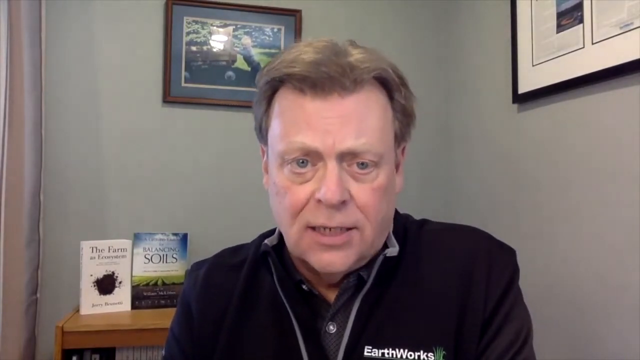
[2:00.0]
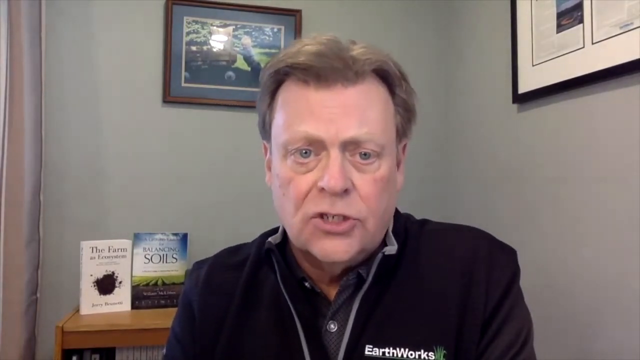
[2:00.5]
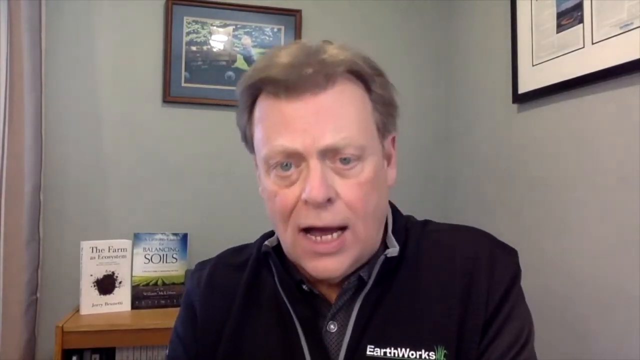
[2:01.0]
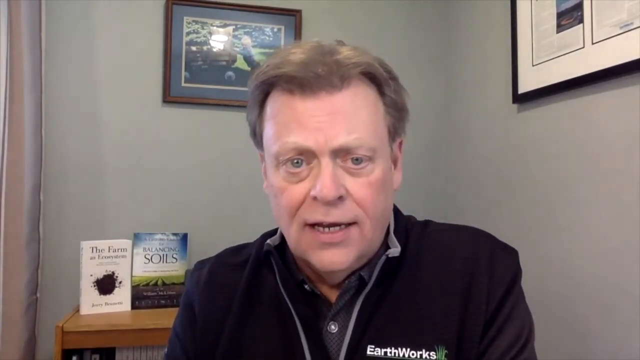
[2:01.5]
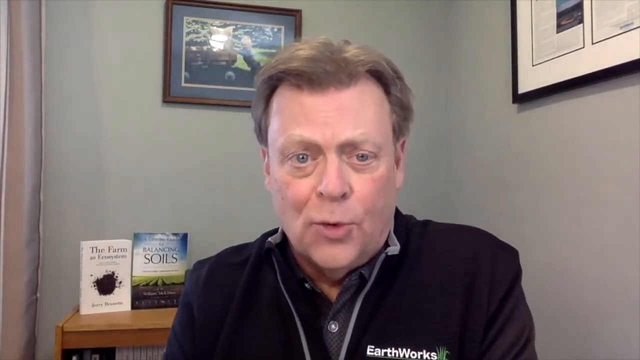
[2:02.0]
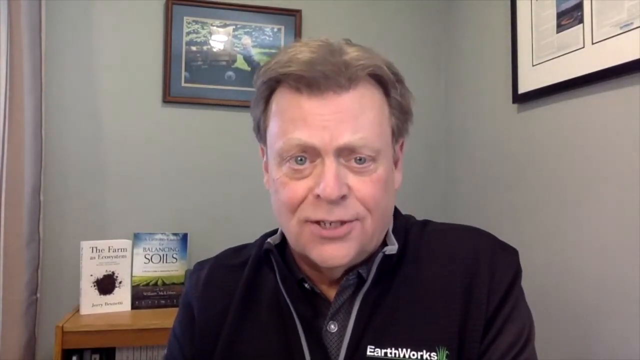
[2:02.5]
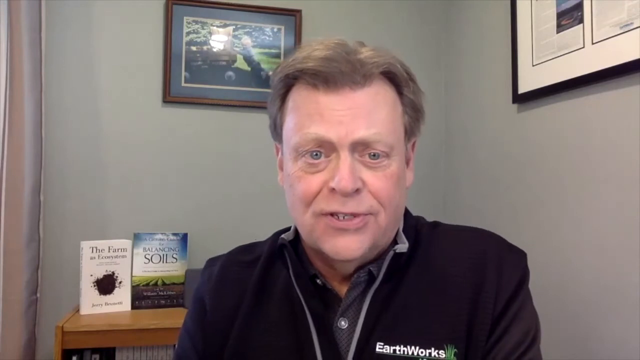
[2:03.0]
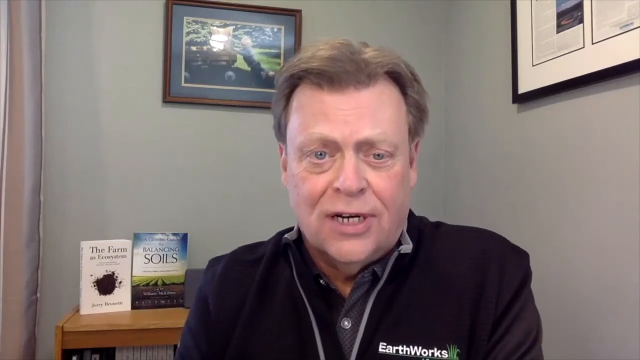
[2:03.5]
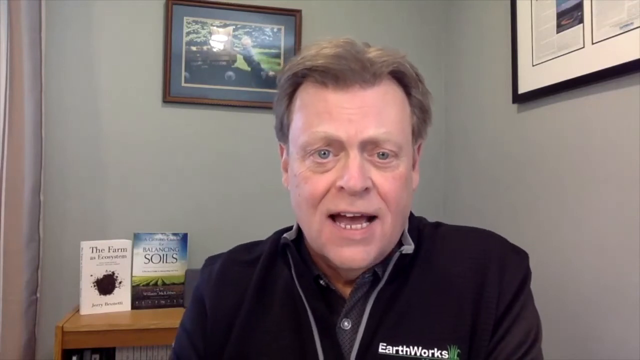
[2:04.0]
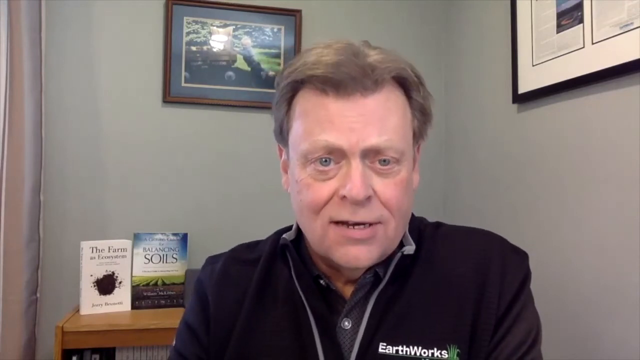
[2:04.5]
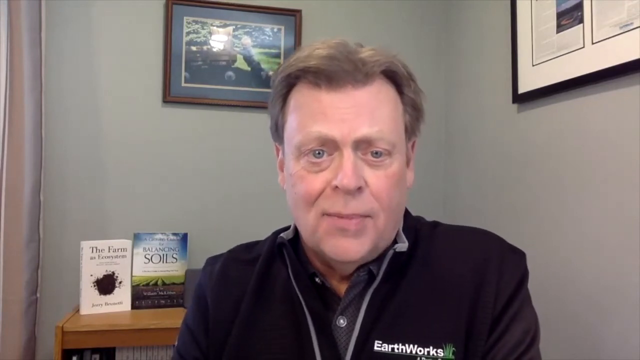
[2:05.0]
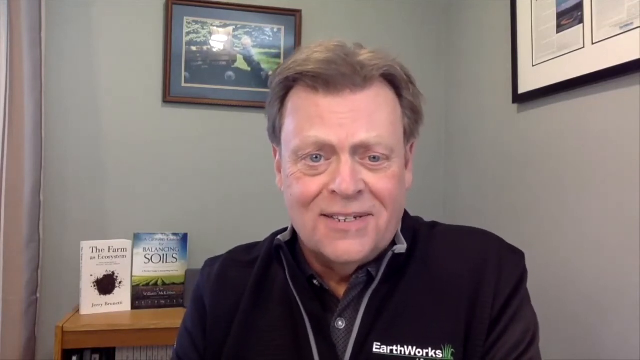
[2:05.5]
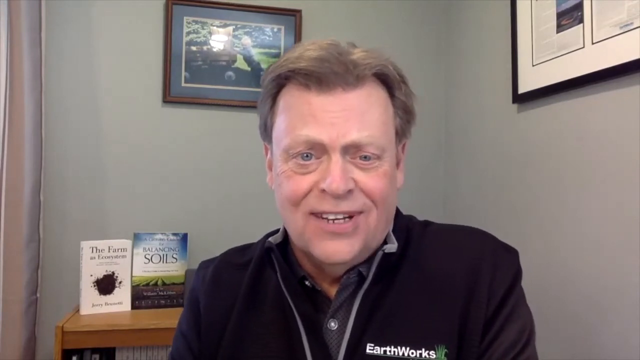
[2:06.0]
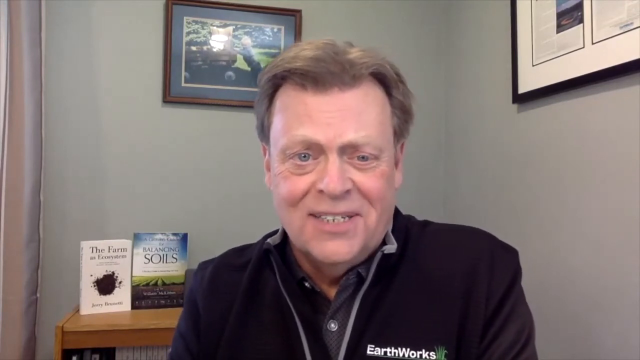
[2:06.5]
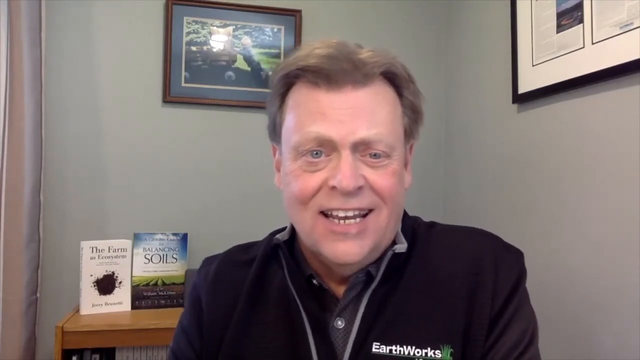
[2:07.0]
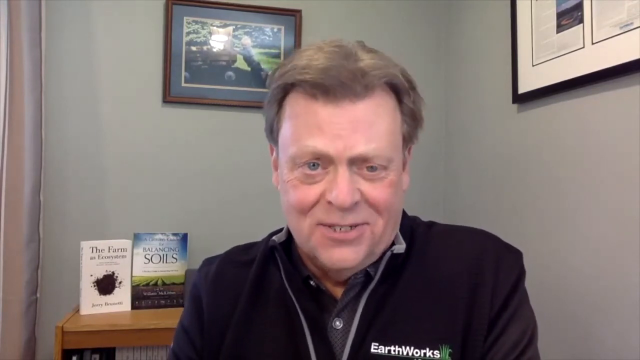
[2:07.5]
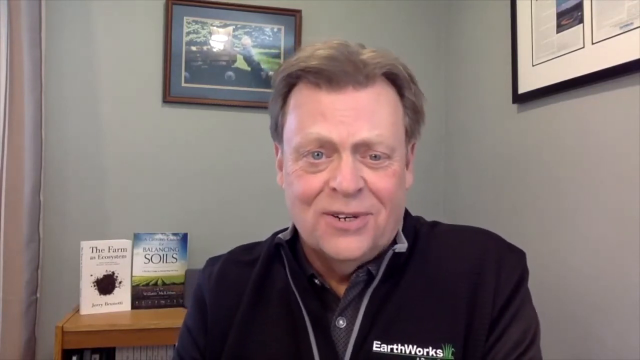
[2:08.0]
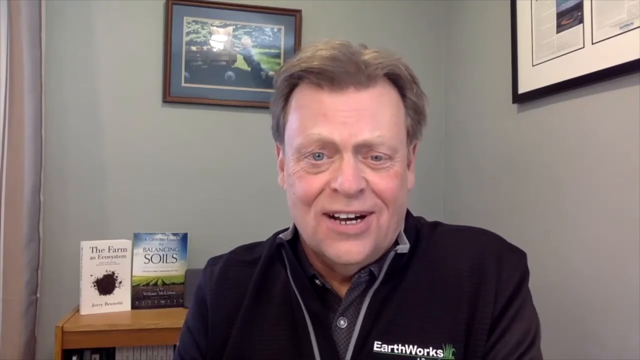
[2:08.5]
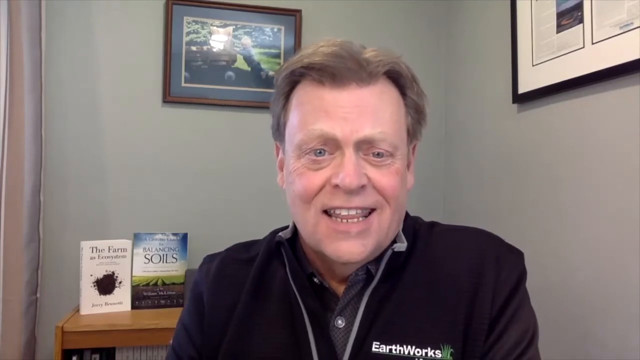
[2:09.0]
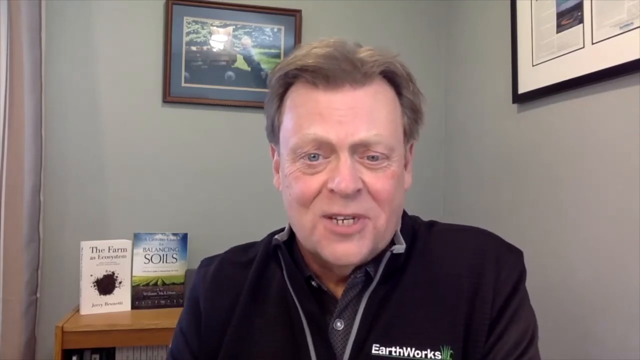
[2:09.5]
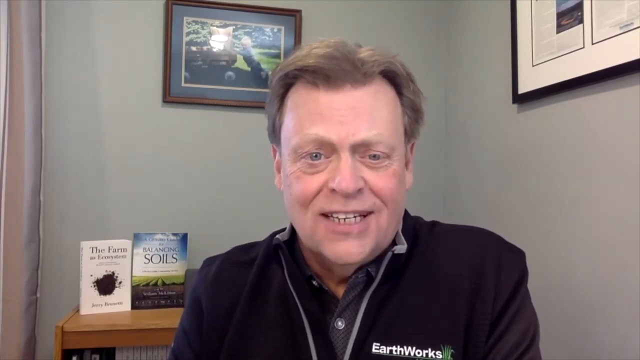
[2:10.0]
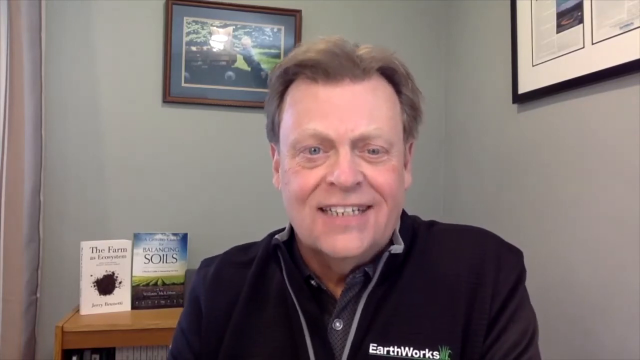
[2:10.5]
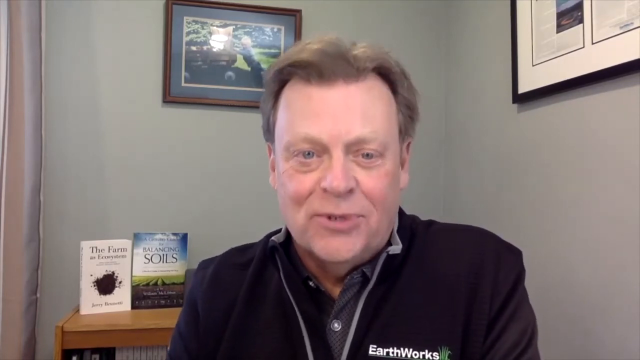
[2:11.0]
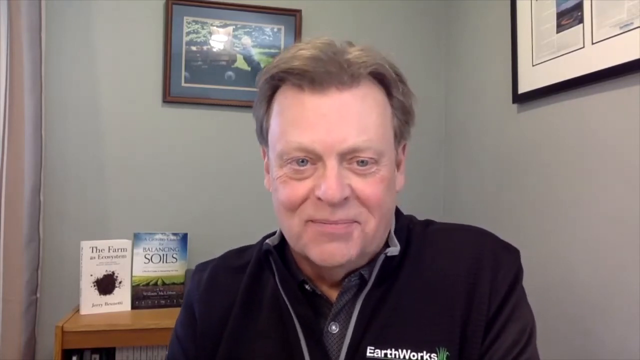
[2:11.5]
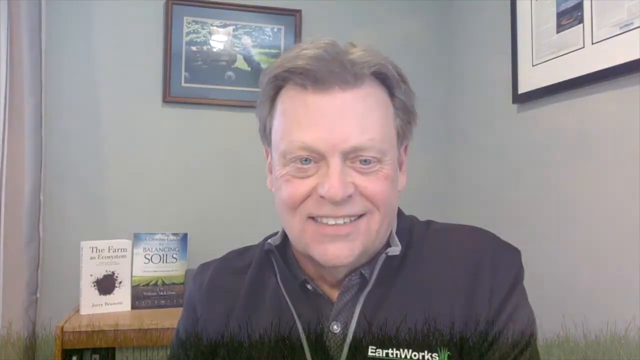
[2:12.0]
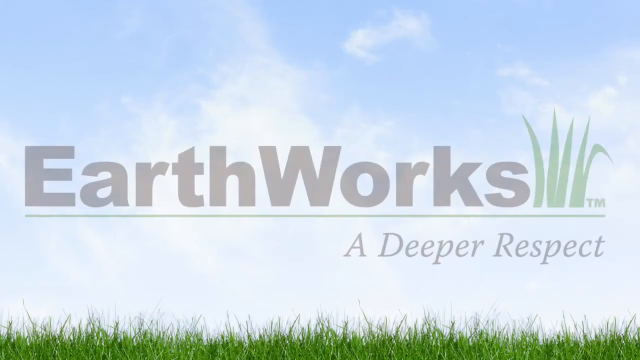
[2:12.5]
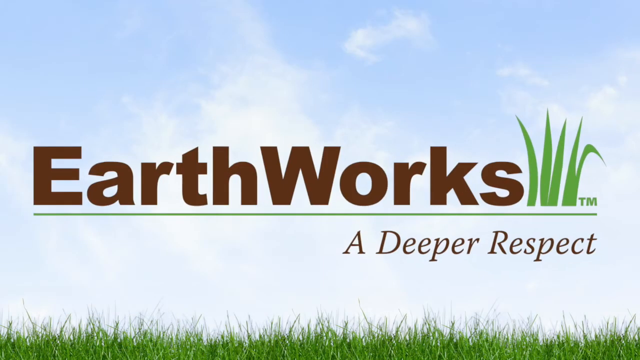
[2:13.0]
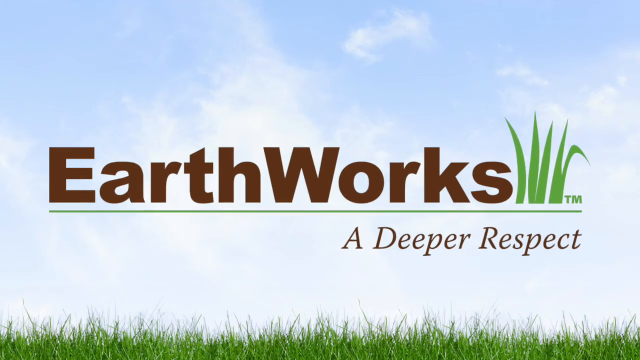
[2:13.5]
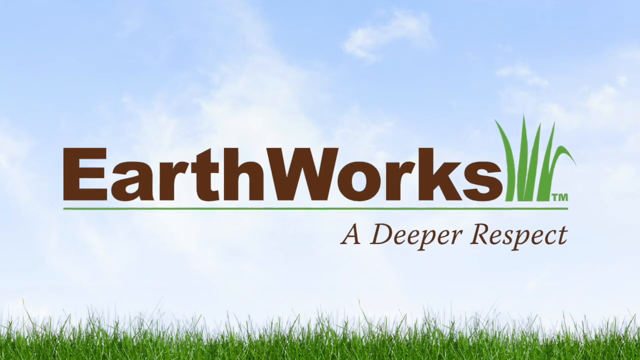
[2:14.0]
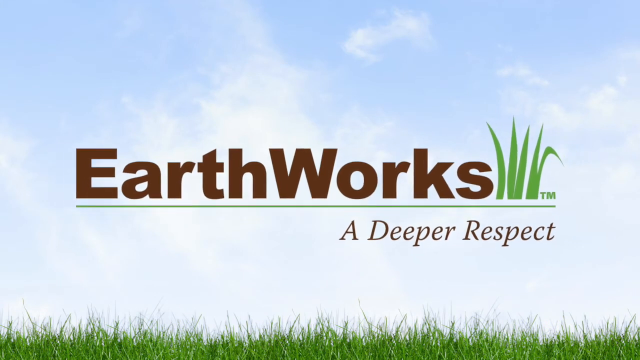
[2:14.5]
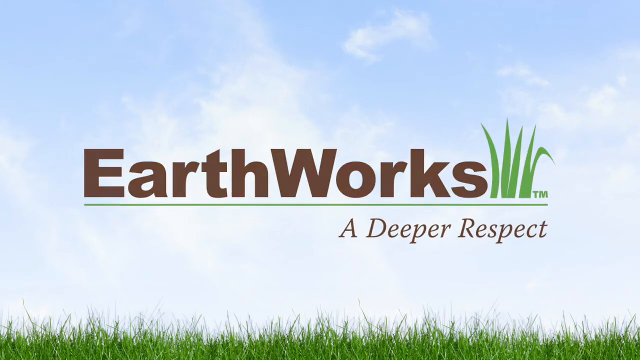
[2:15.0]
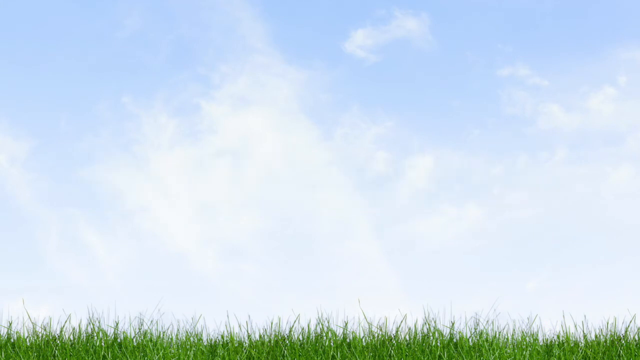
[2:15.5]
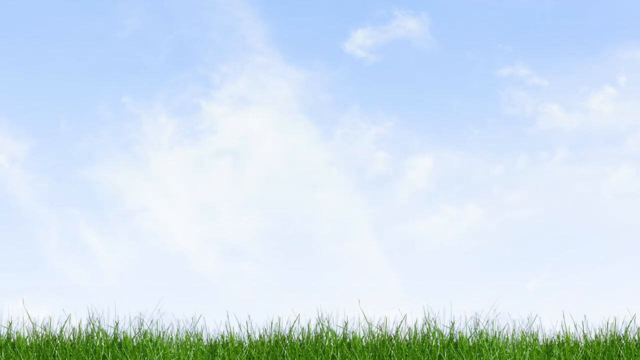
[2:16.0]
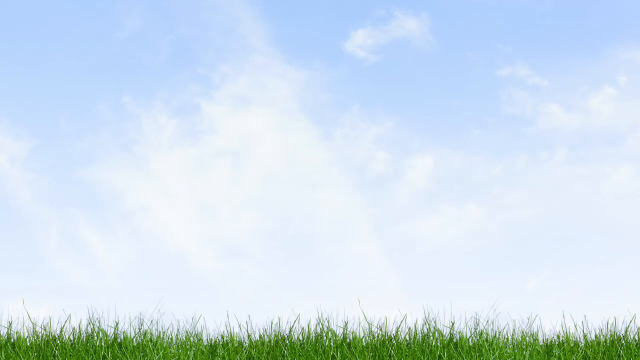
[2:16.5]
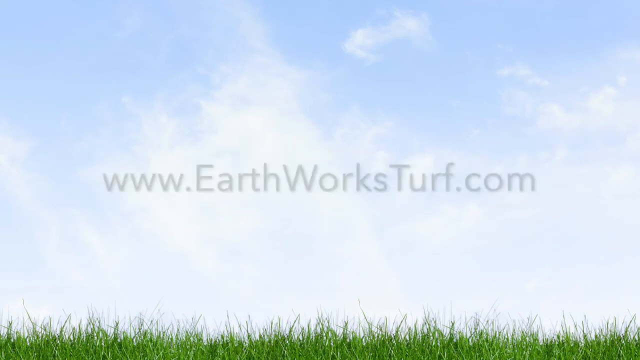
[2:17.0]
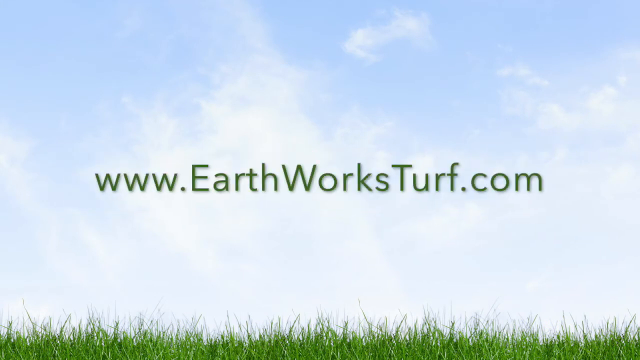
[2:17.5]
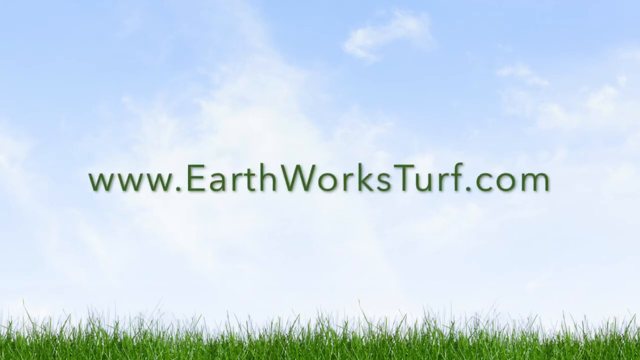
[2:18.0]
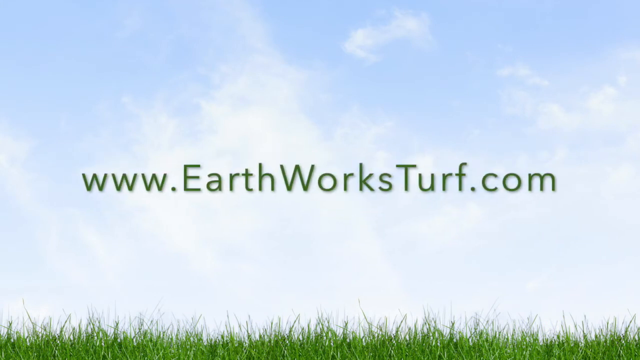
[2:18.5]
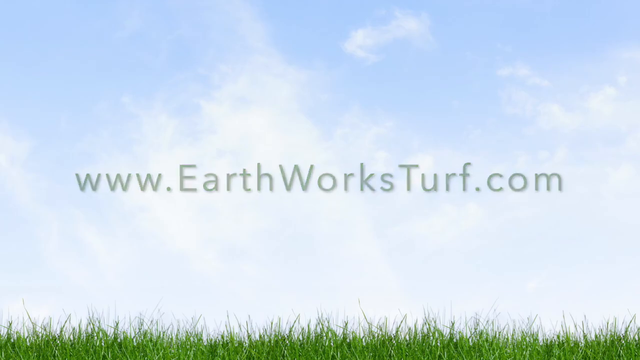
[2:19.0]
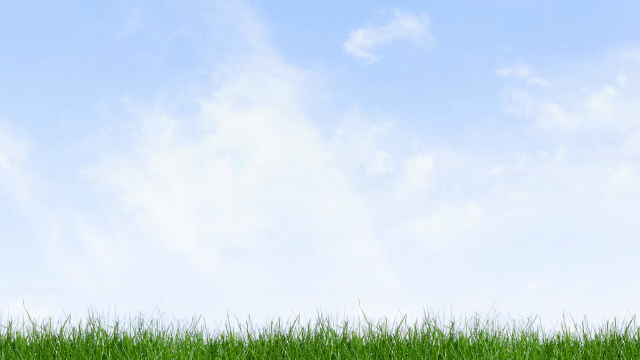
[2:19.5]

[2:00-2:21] Joel Simmons is in his office, speaking rather intently toward the camera; he smiles as he talks and laughs a bit. Over his left shoulder behind him are two books, apparently written by him: one is "Balancing Soils" and the other "The Farm Ecosystem." On the wall behind him is a framed picture, and to his right is another picture. He wears a black shirt with what is kind of his logo stitched into it: "Earthworks." The video then cuts to a slide that says "Earthworks, A Deeper Respect," with what looks like a cloudy day, "Earthworks" in brown, and what looks like grass, apparently the company logo. It also shows the website address "www.earthworksturf.com."